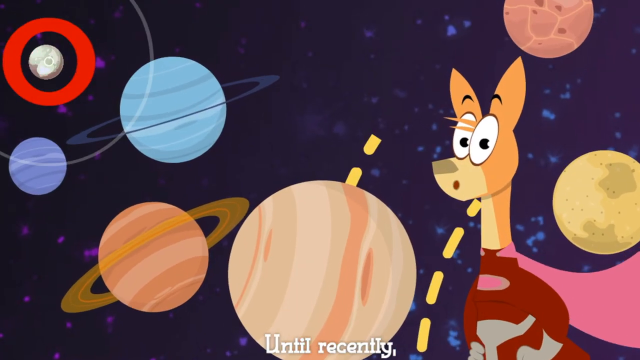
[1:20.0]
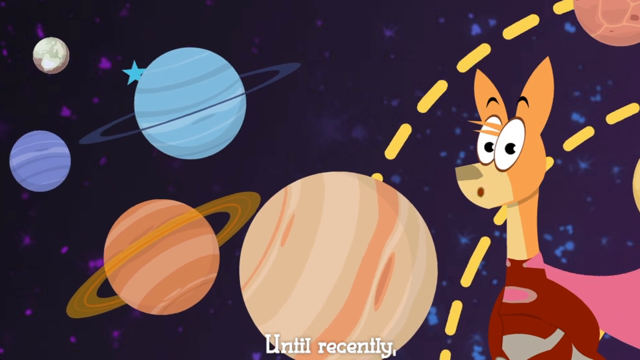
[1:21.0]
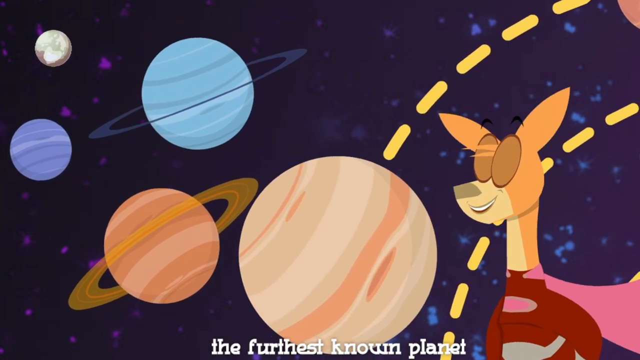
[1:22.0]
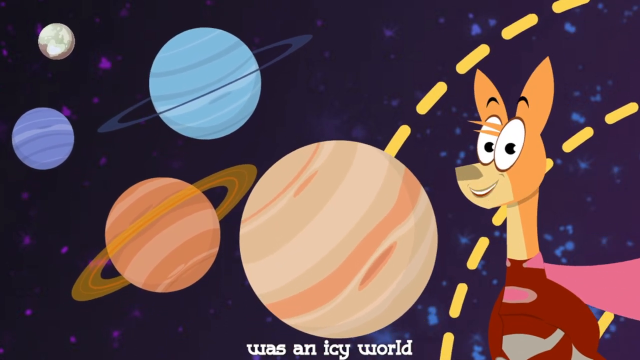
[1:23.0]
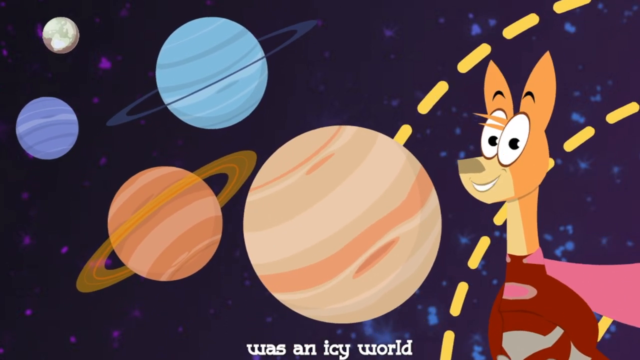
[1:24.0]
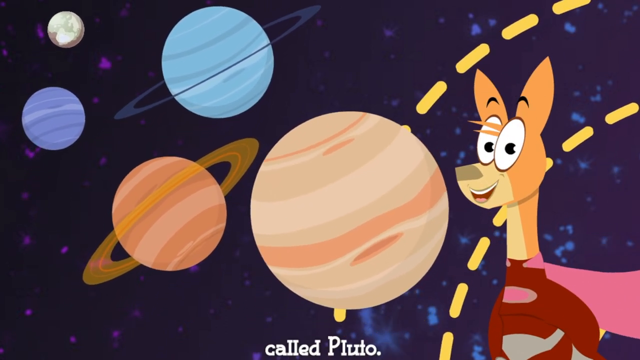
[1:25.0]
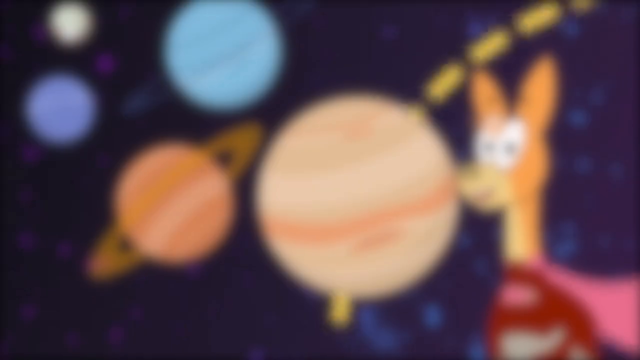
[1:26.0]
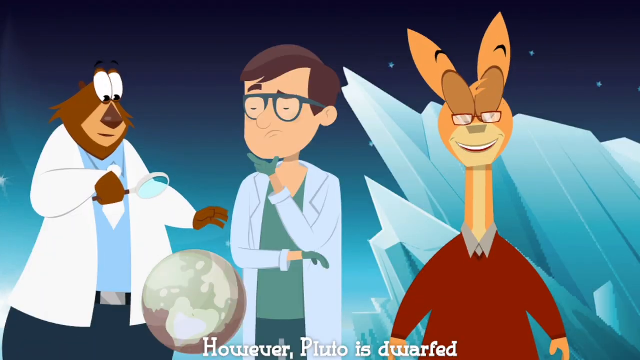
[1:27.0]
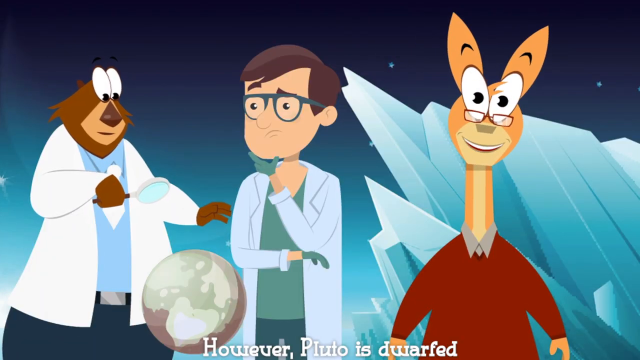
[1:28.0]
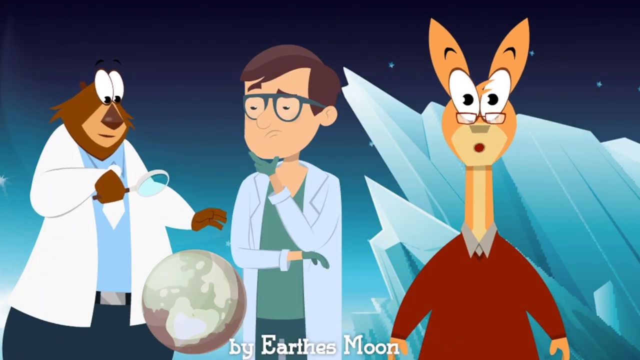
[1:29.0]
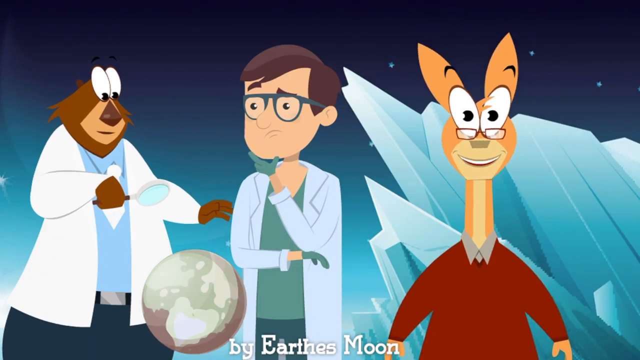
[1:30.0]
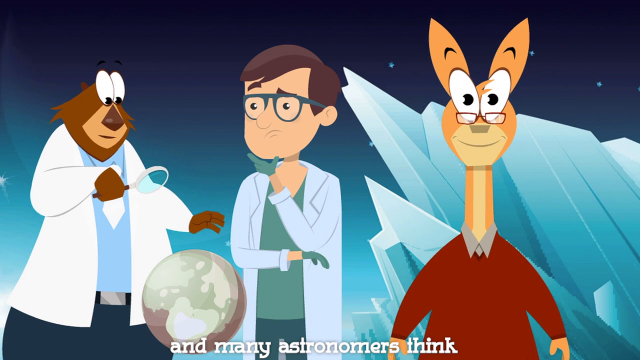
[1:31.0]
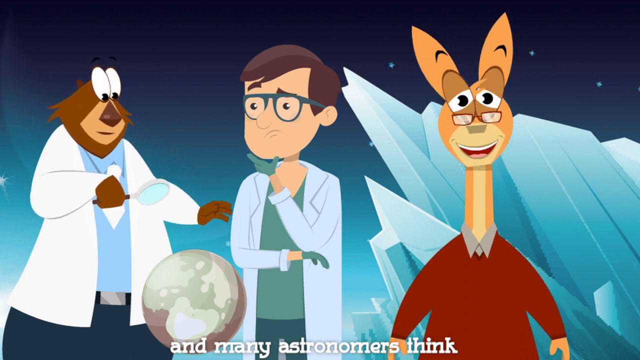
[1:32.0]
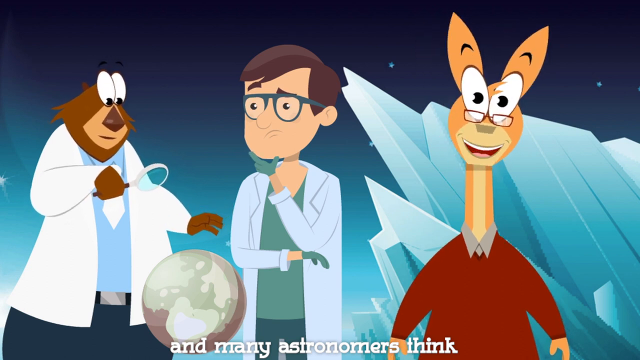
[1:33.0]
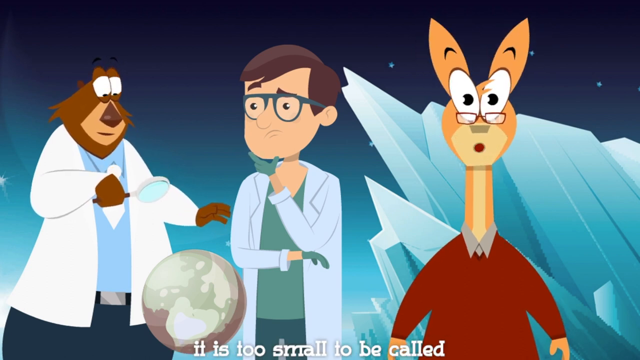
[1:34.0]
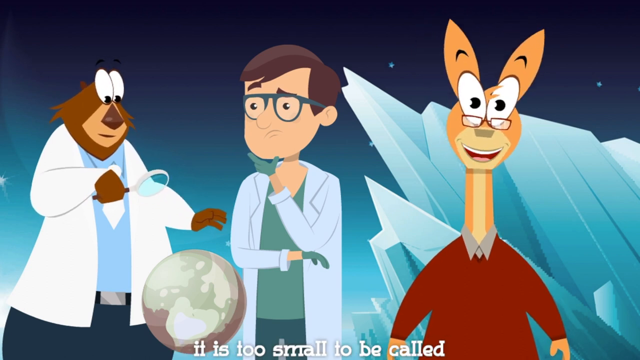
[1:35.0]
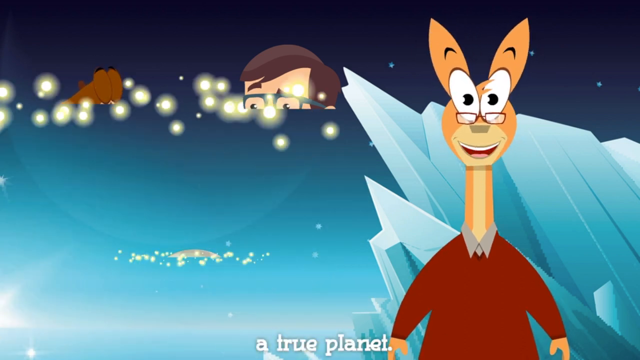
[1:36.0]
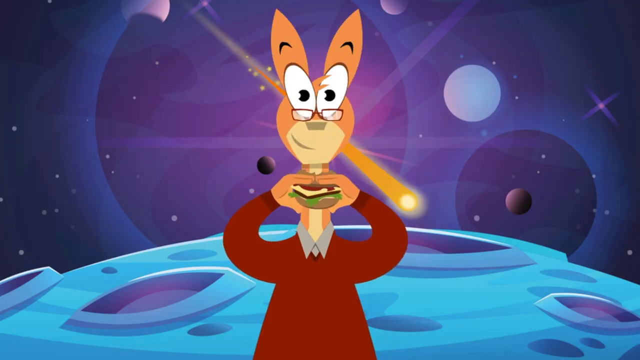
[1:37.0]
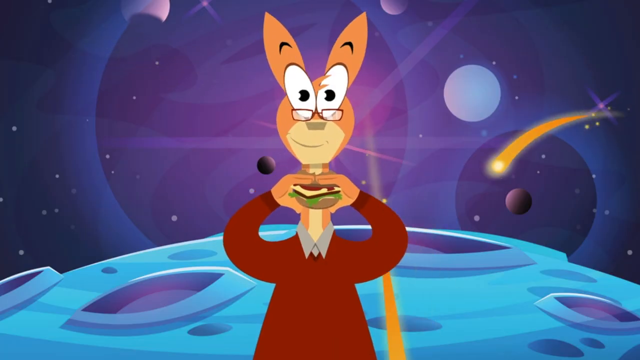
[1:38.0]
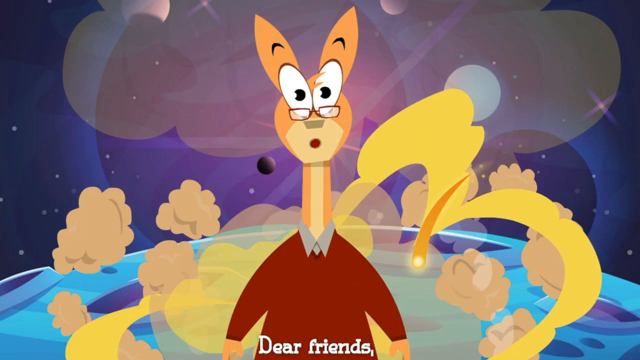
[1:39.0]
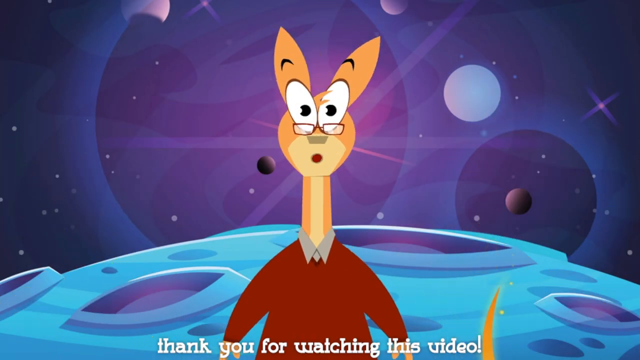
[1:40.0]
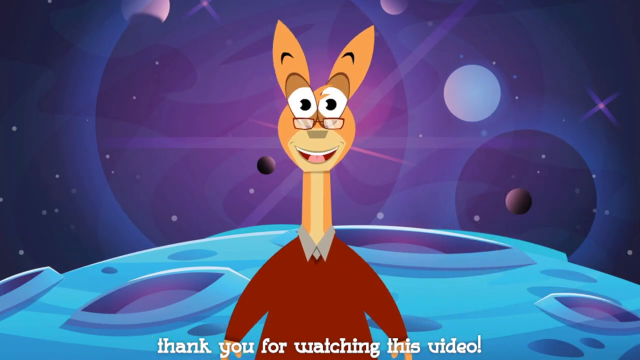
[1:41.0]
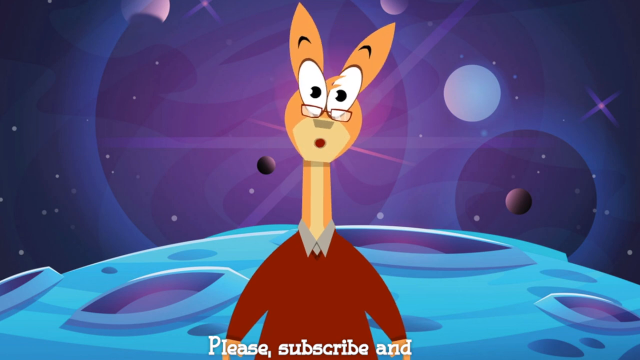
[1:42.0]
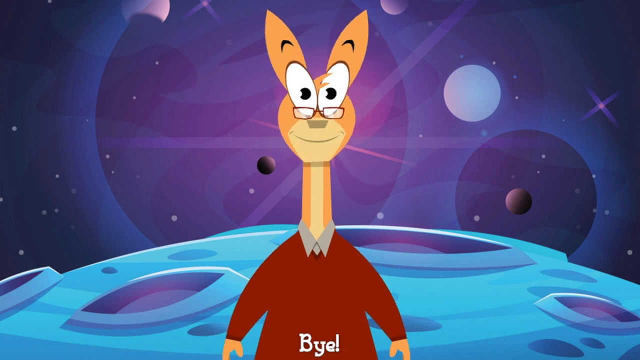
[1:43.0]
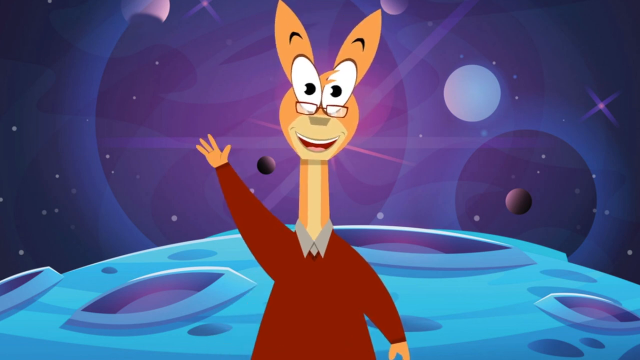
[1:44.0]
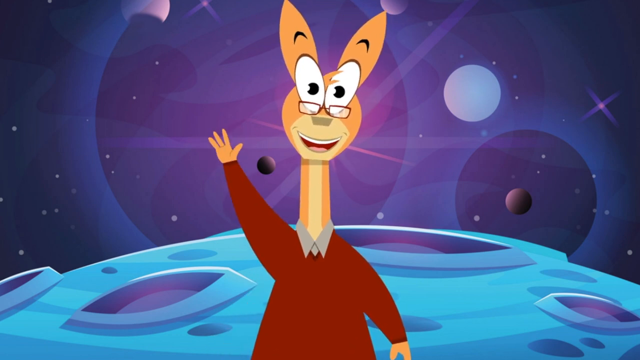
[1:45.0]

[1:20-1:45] A sunless outer space scene has numerous dots peppered across the dark screen. The focus is on the moon, the smallest planet on the screen, indicated by a red circle targeting it in the top left corner of the screen. The deer continues to talk to the camera while blinking. His cape moves as if a wind were blowing on it, and he wears his red superhuman suit. The scene cuts to scientists with magnifying glasses: one is a human and the other is a bear, both wearing white scientist suits over blue and green civilian clothes. Finally, the scene cuts to the deer out of costume, looking at the camera and holding a sandwich he has taken a bite out of, while comets and space debris shoot from one side of the screen toward the center. He waves at the camera up and down with an open hand while smiling.